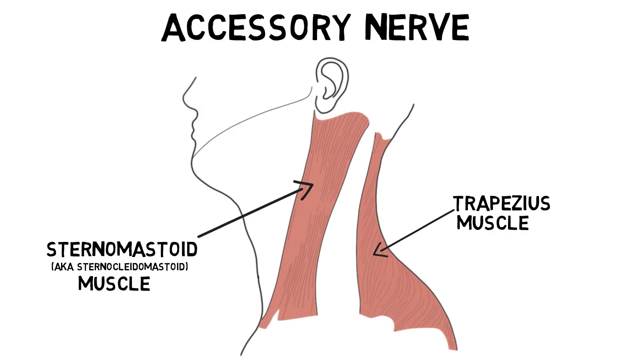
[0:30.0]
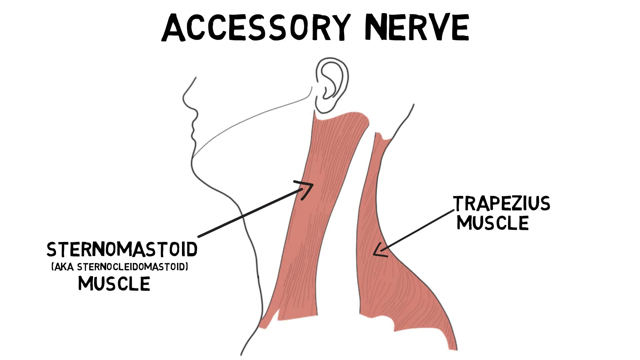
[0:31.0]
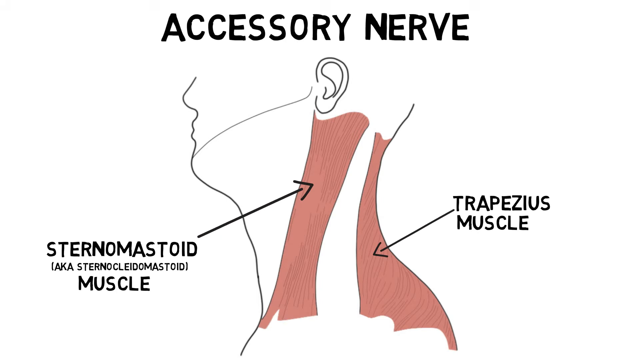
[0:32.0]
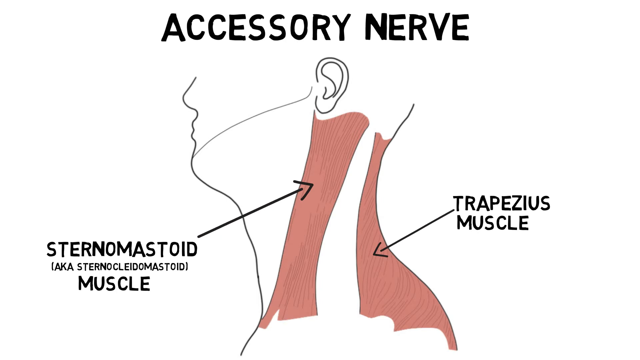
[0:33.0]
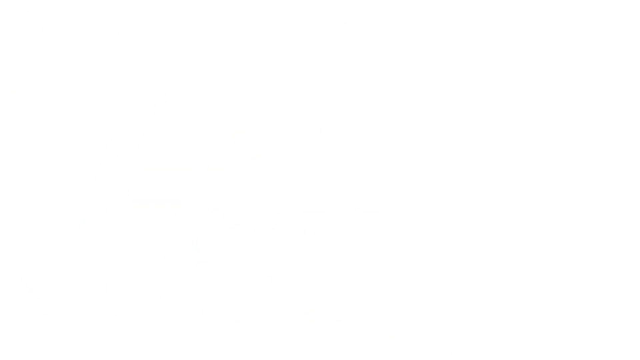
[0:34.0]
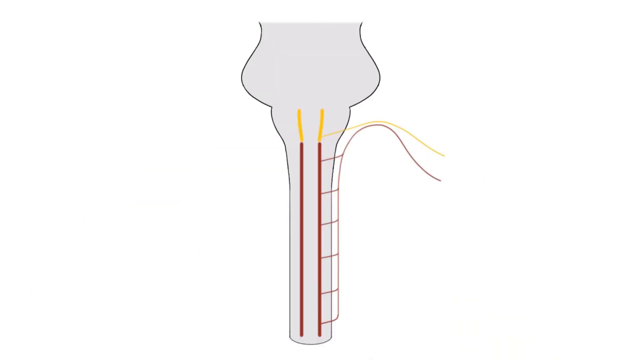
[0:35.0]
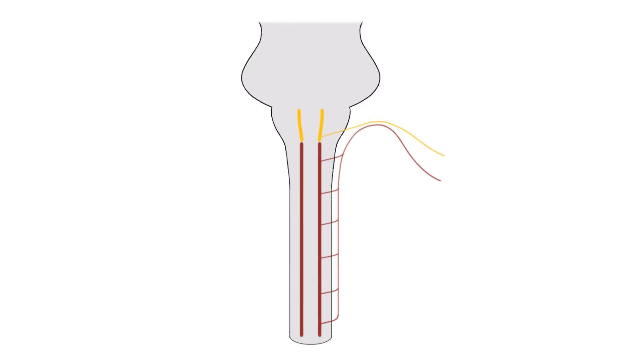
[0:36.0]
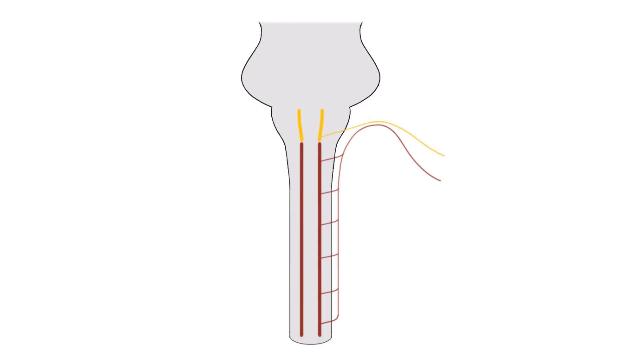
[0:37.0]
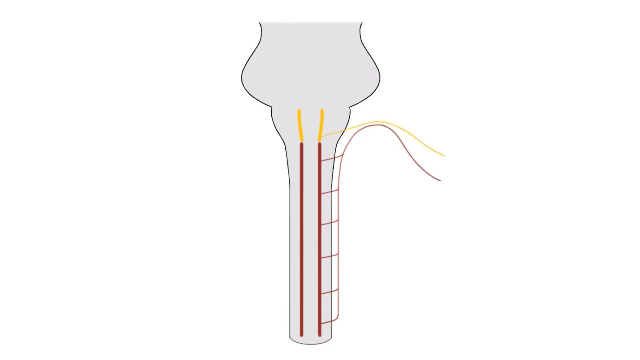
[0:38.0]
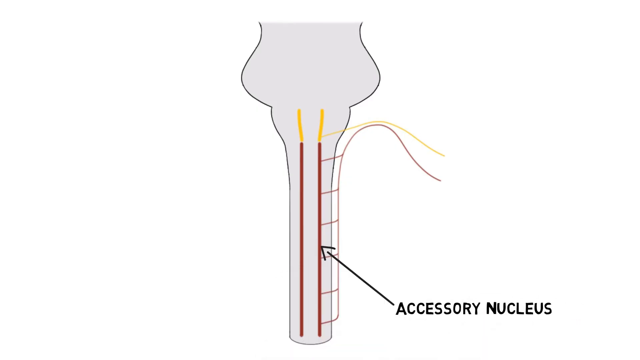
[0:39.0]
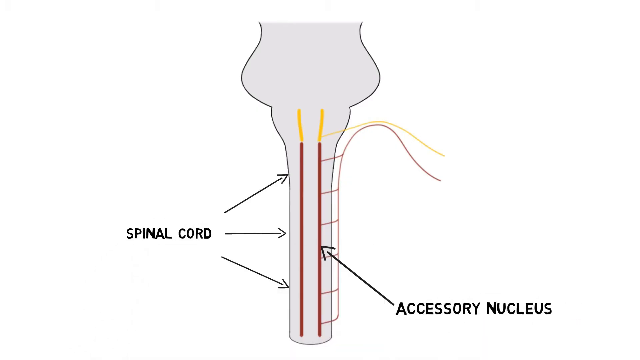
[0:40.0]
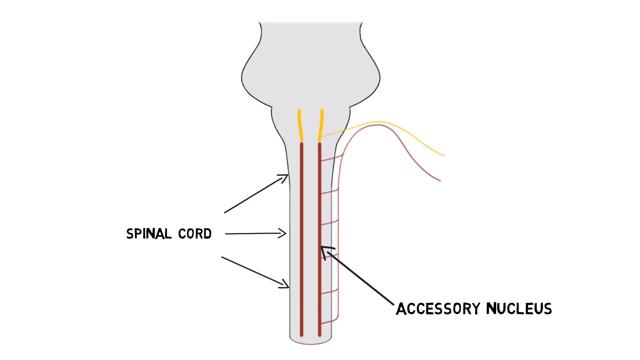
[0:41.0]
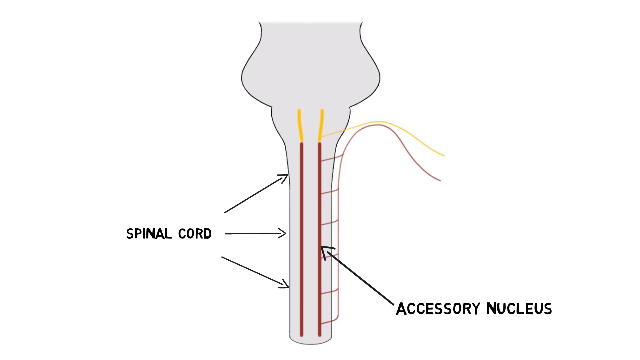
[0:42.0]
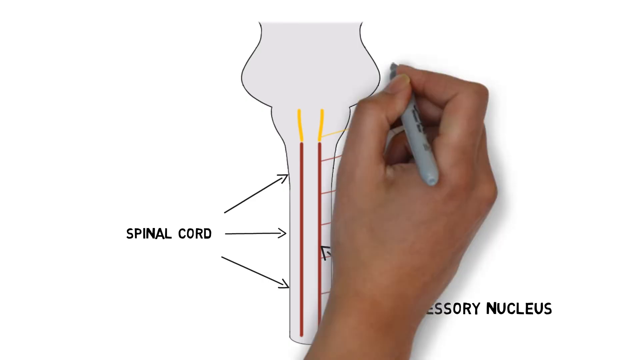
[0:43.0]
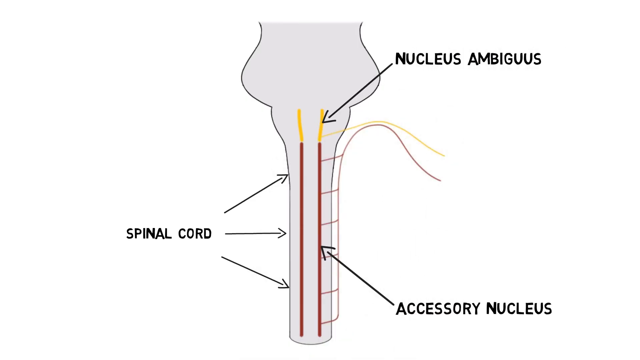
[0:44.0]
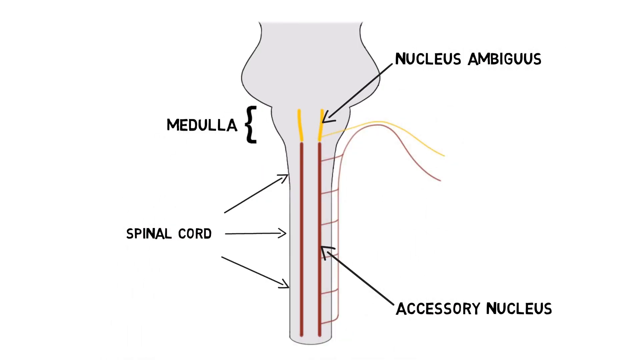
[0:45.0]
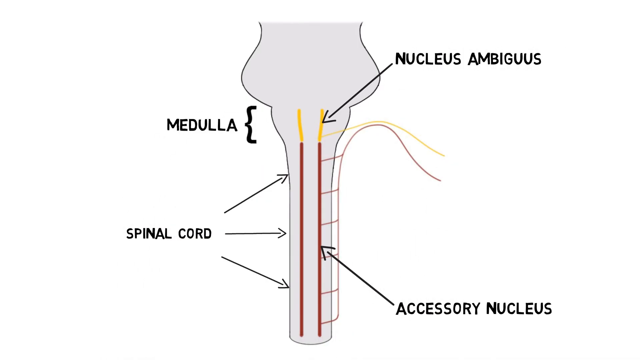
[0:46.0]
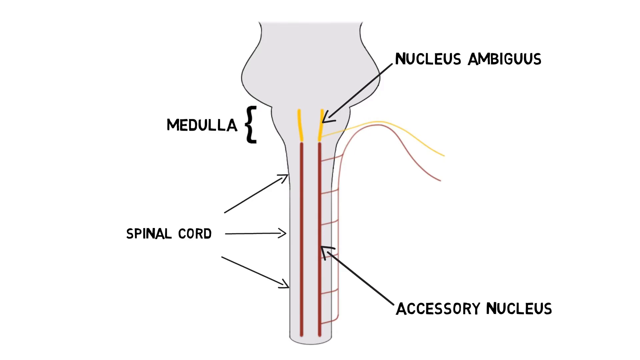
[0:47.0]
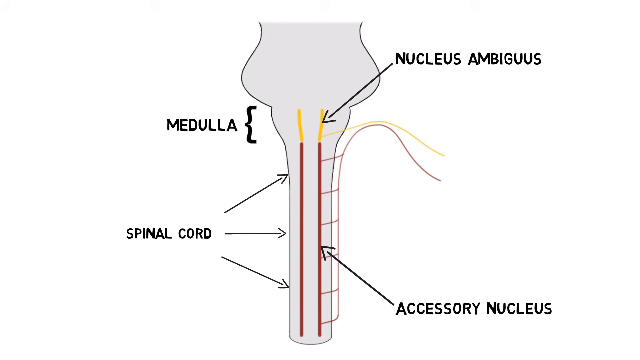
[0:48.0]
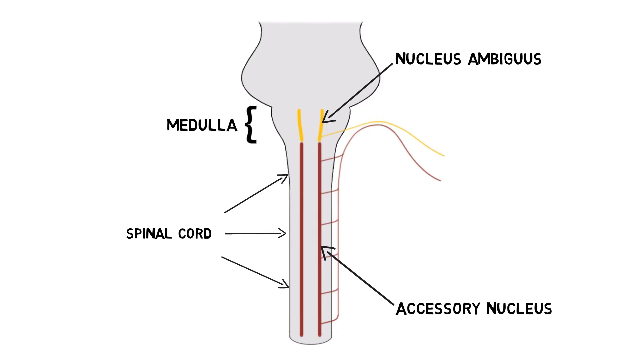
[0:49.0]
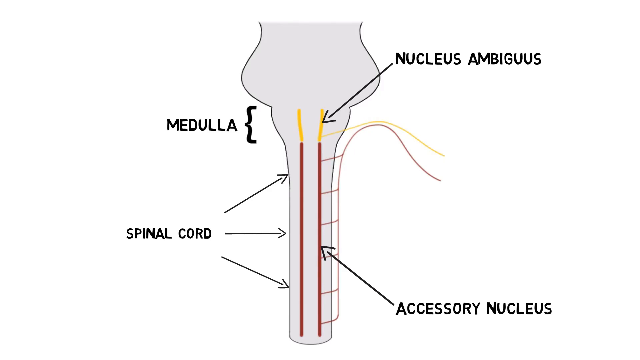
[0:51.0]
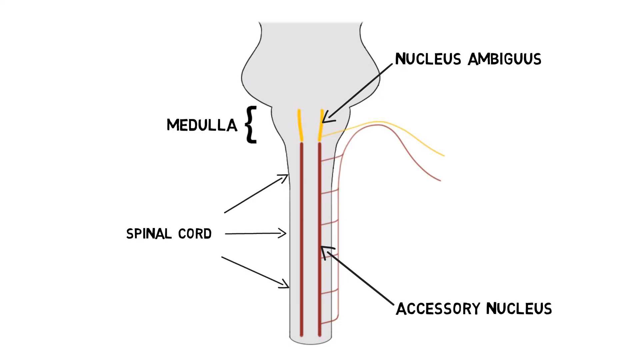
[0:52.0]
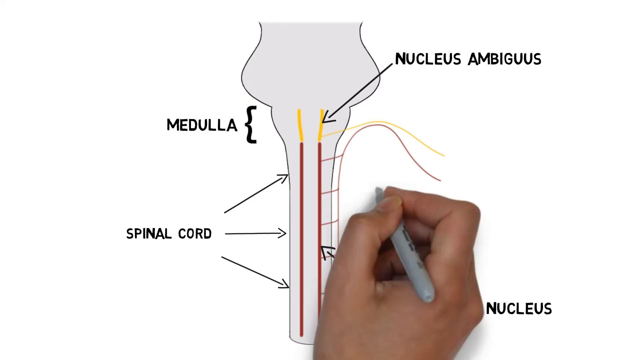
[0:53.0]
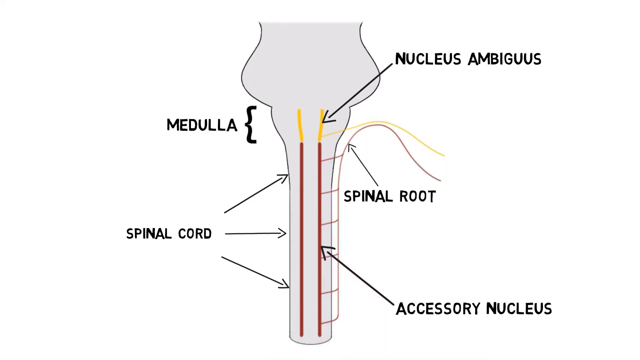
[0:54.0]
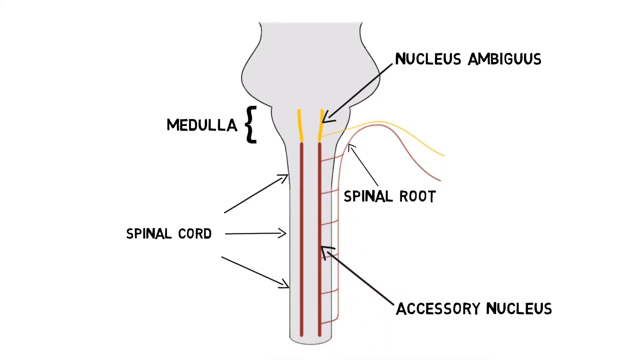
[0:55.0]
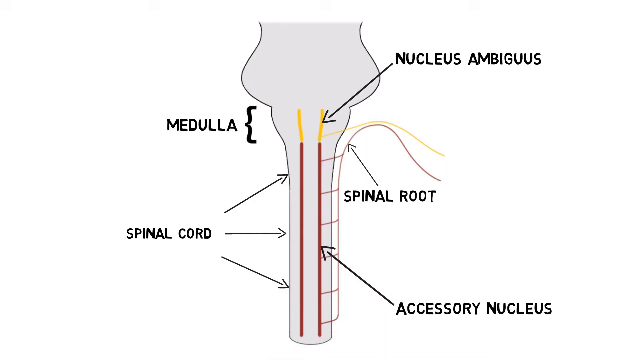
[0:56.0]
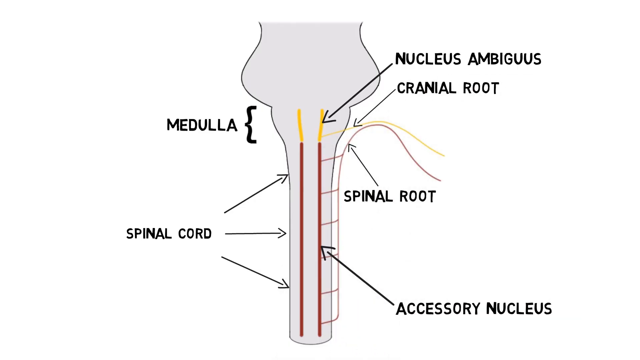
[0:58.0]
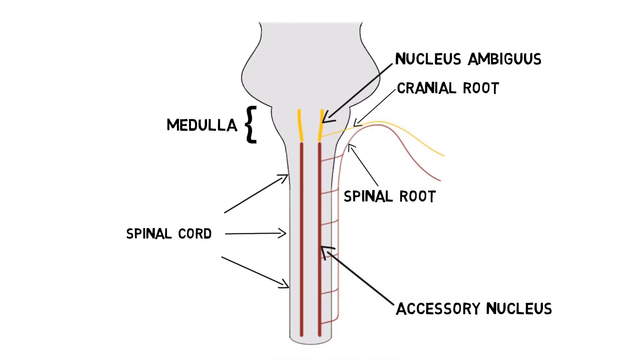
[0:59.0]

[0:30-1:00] A drawing of someone's back appears on a white background, with a gray area inside the outline of the back. The spinal cord is shown in a reddish, rust color, and three arrows point at it. The nucleus and the medulla area are shown in yellow, labeled "Nucleus Ambiguus" and "Medulla." An "Accessory Nucleus" is marked maybe a third of the way down the spinal cord, and "Spinal Root" is labeled right under the medulla. There appears to be a ladder next to the spinal cord. A "Cranial Root" label points to a yellow area. All the writing is in black.